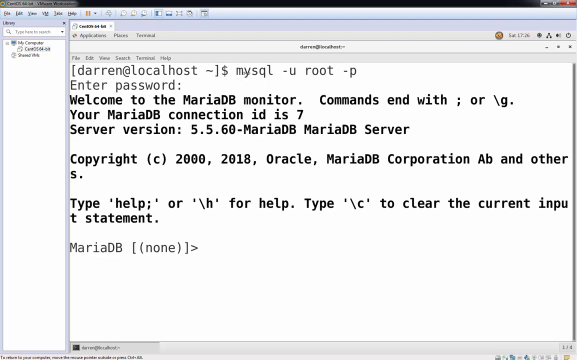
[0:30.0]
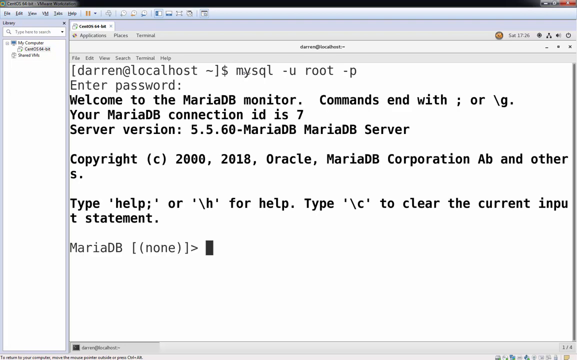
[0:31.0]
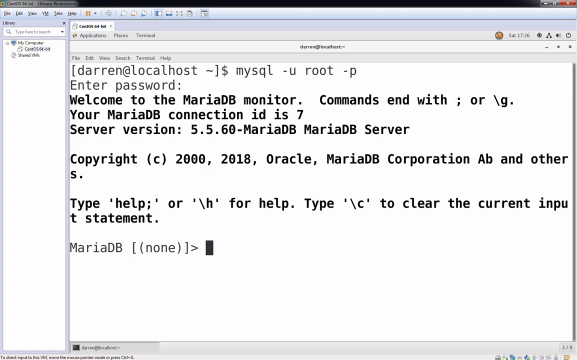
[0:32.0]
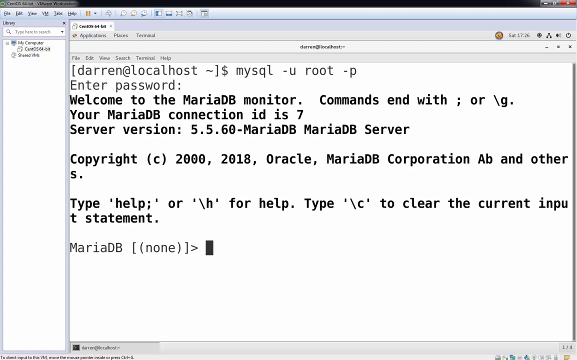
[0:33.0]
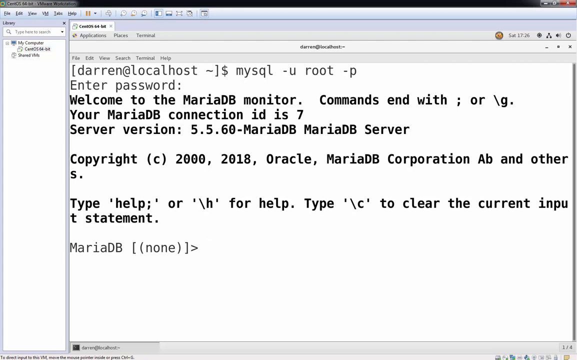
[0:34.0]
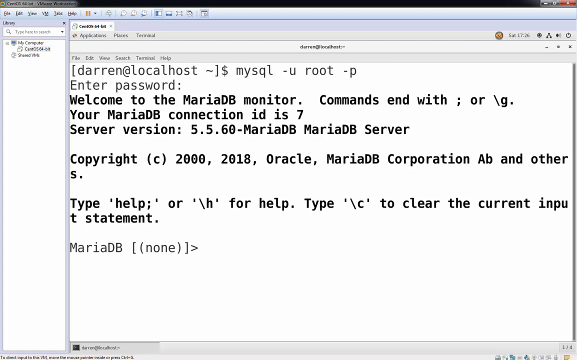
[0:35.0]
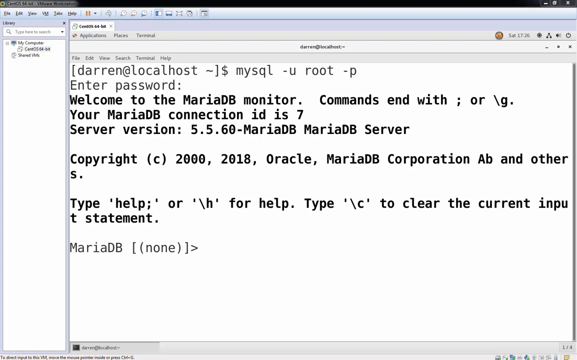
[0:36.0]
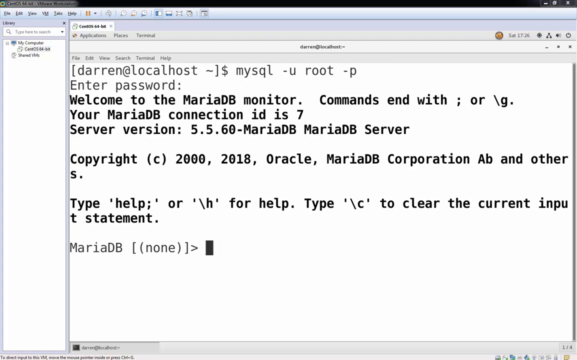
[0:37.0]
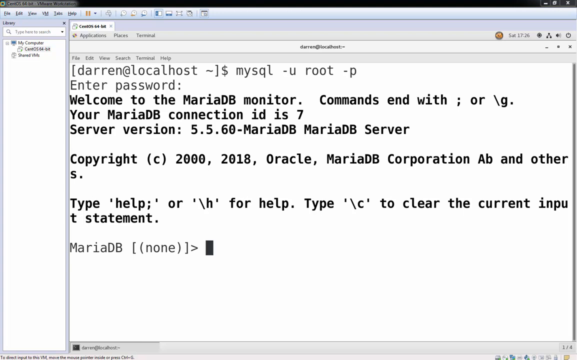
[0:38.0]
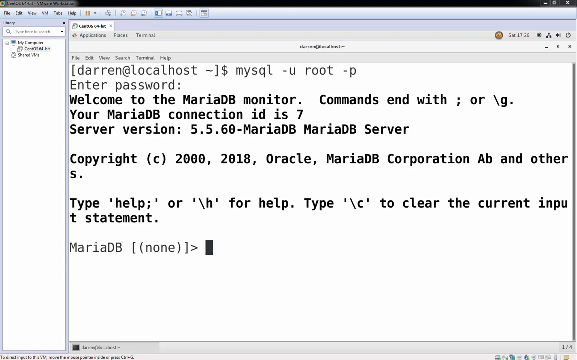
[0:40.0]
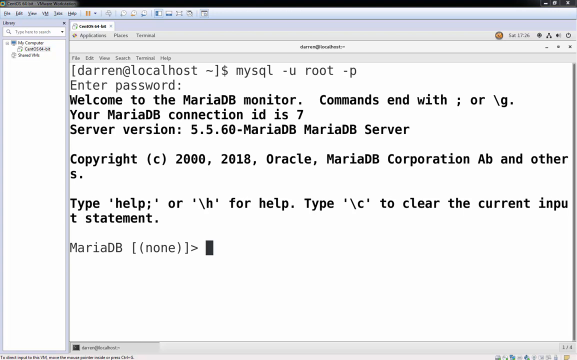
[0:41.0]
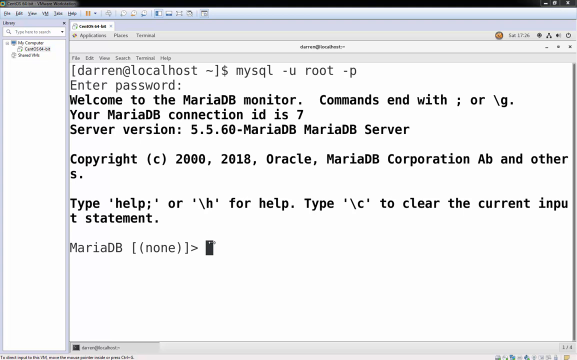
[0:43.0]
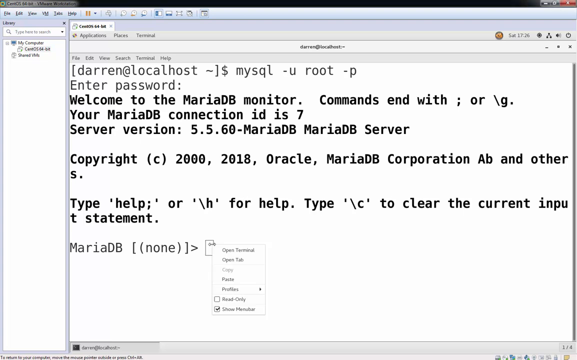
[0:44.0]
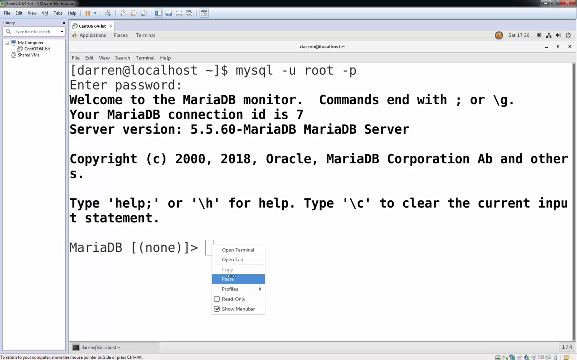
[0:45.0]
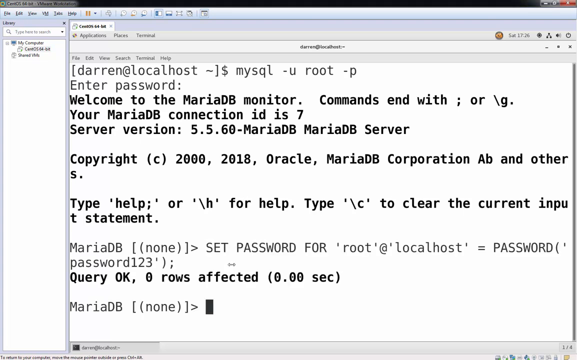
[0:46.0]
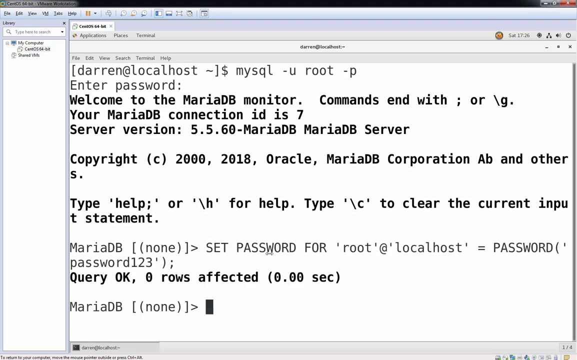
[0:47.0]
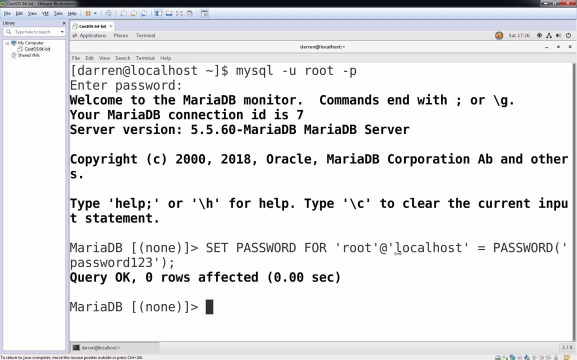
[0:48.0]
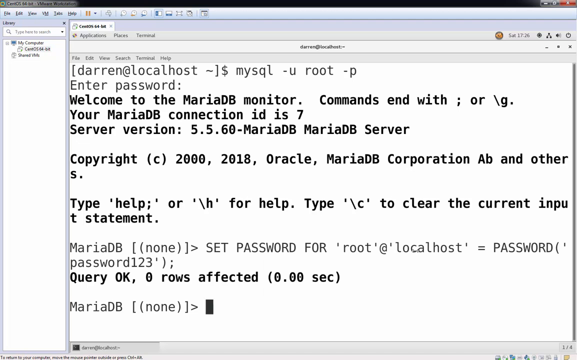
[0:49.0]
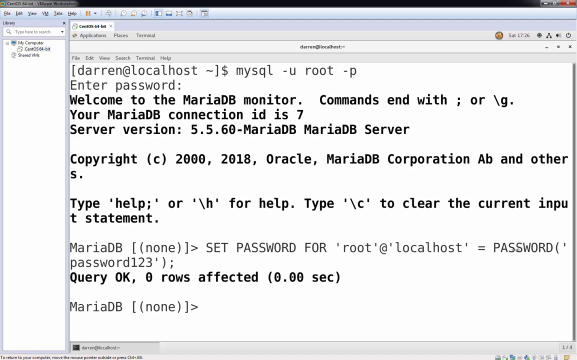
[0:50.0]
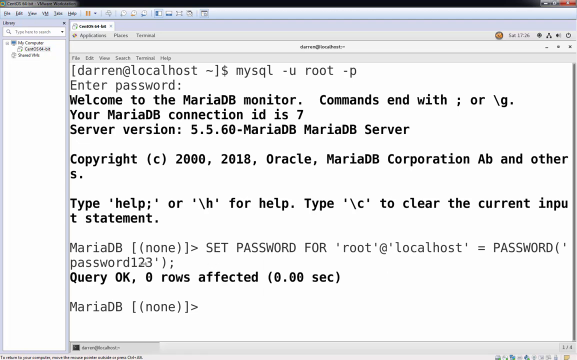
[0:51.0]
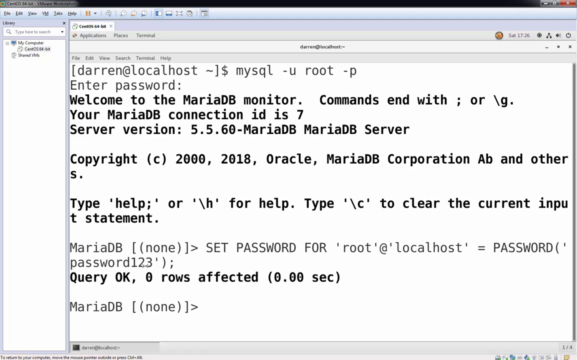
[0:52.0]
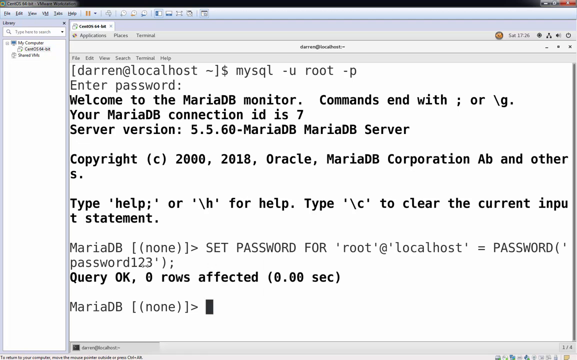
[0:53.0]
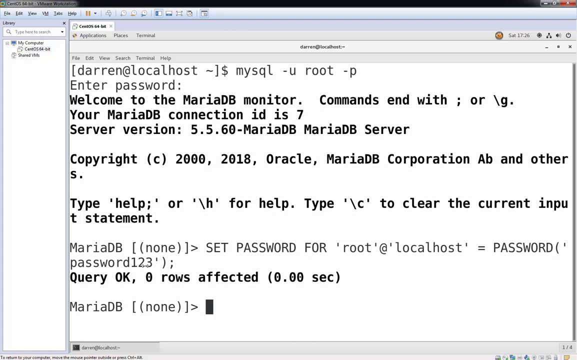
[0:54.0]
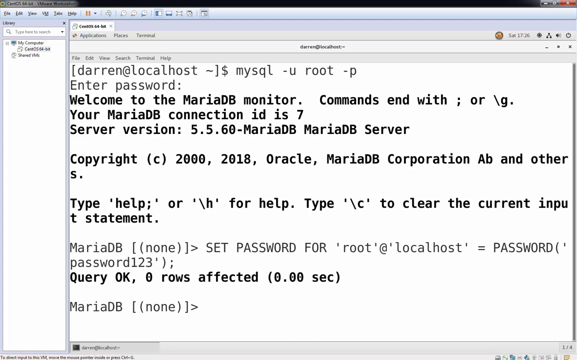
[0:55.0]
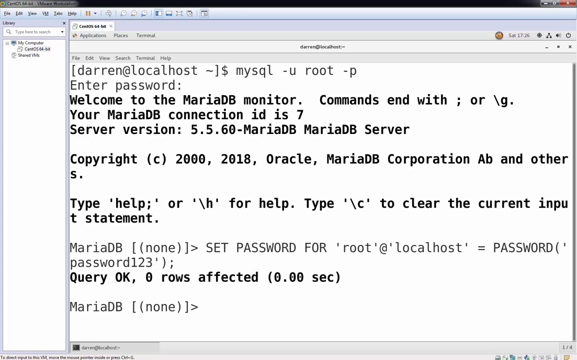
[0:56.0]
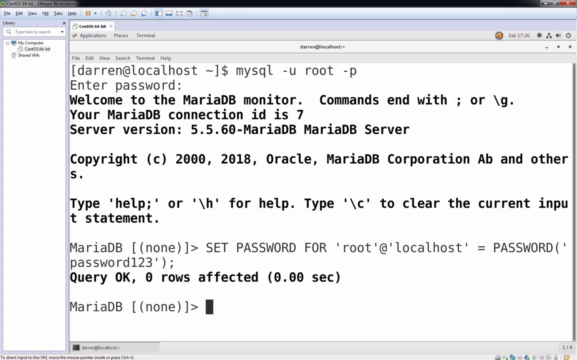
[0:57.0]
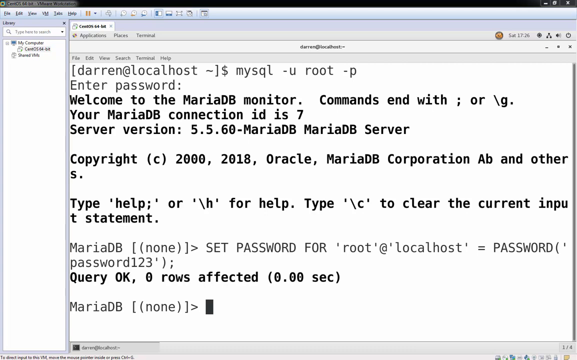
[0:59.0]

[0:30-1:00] The same program remains on screen, with a cursor blinking to the right of the last line, the "MariaDB" prompt with "none" in brackets and parentheses followed by a greater-than sign. The cursor blinks for a while, then stops blinking and shows as a solid rectangle. A very small mouse cursor moves down to it and clicks, and a box appears. Its options are open terminal, open tab, copy (grayed out), paste, profiles, and read only and show menu bar buttons; the show menu bar button is checked with a black check mark. Paste is clicked, and the line "set password for root at local host = password (password123);" appears, followed by "query okay, 0 rows affected (0.00 sec)". The "MariaDB" prompt with "none" in brackets and parentheses and a greater-than sign appears again, with the cursor flashing. A mouse cursor moves around near the bottom of the screen for a few seconds.